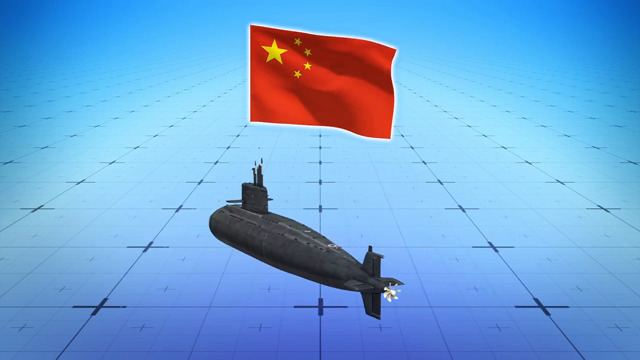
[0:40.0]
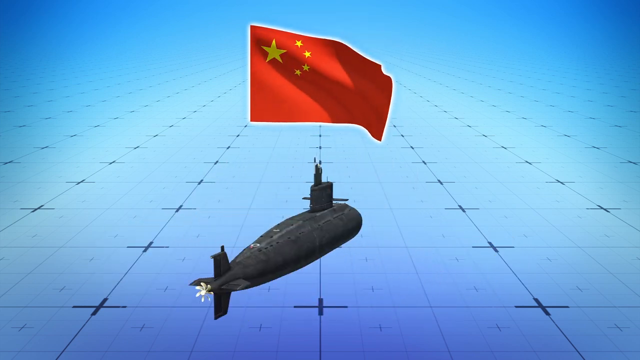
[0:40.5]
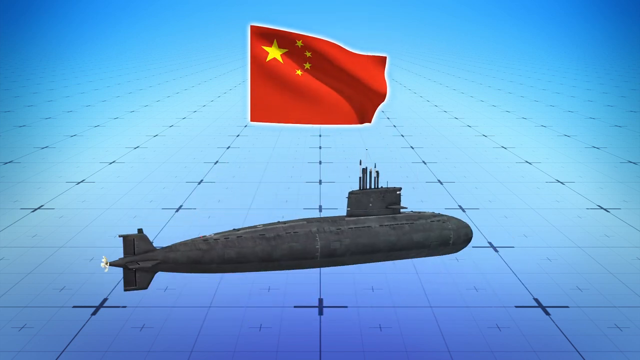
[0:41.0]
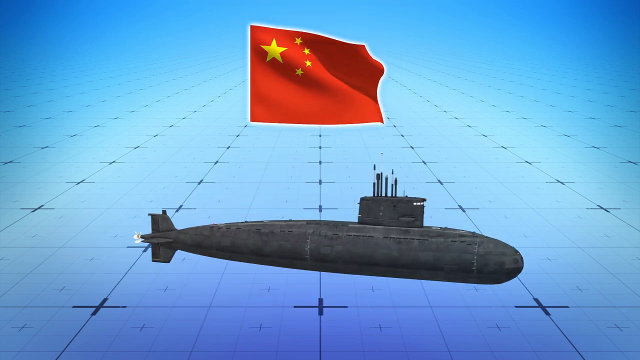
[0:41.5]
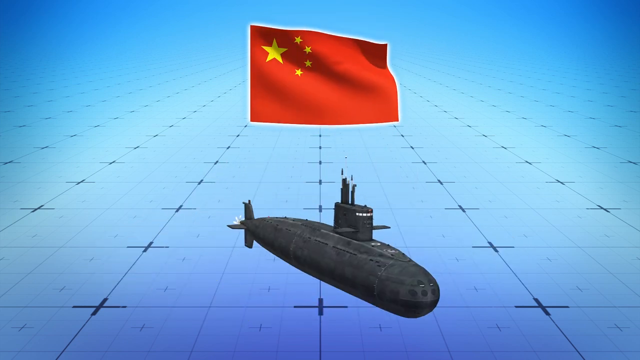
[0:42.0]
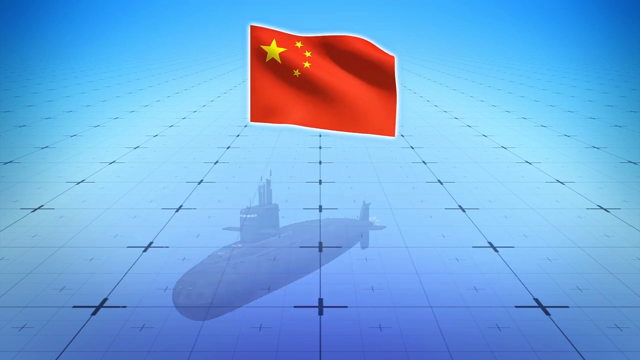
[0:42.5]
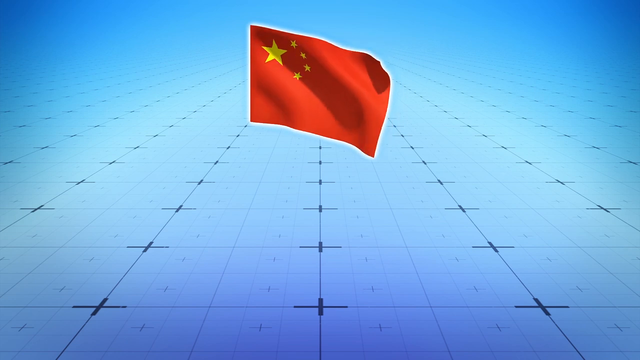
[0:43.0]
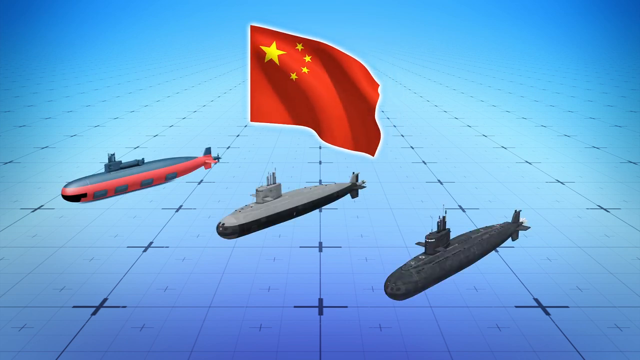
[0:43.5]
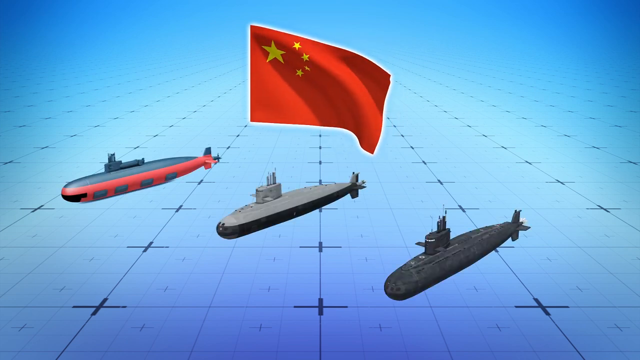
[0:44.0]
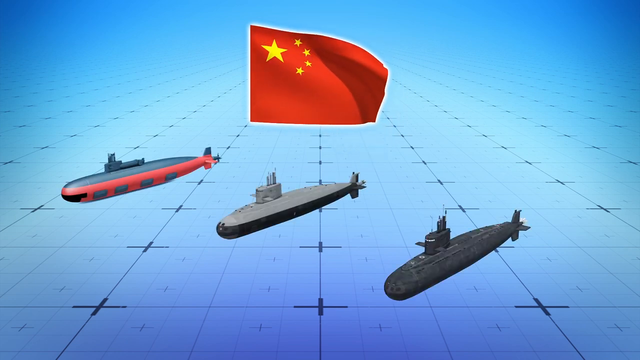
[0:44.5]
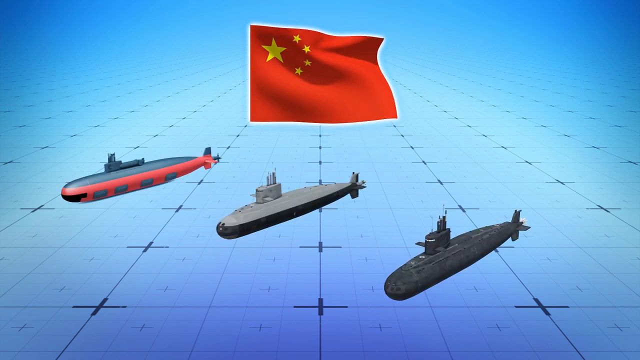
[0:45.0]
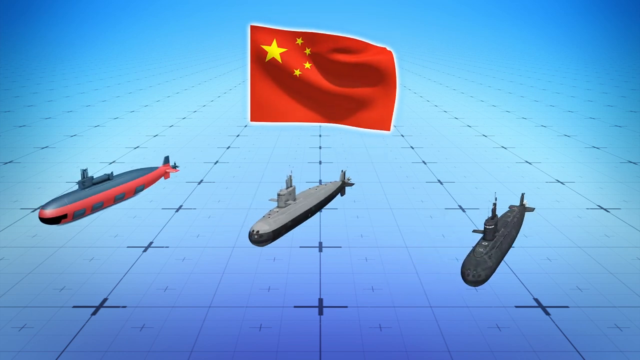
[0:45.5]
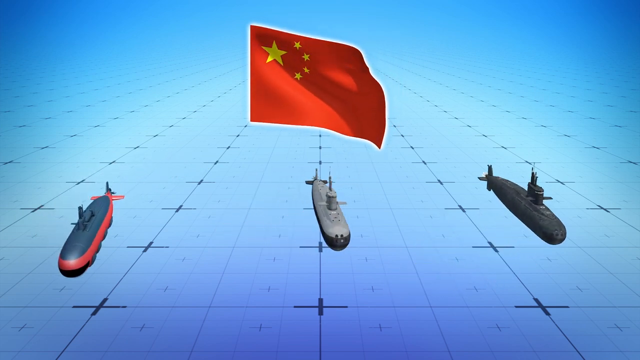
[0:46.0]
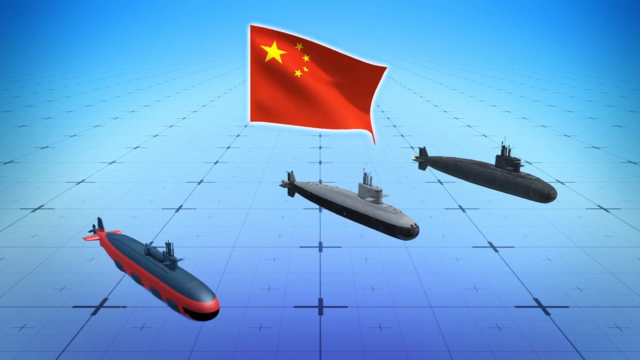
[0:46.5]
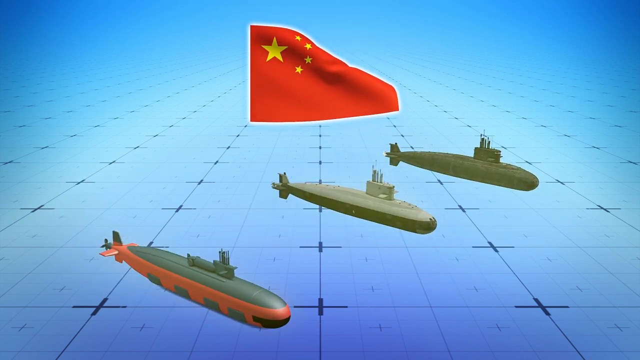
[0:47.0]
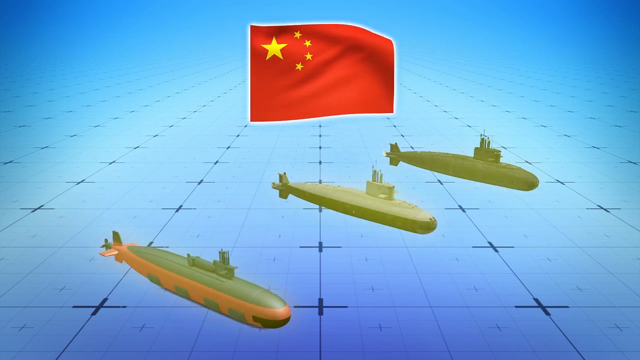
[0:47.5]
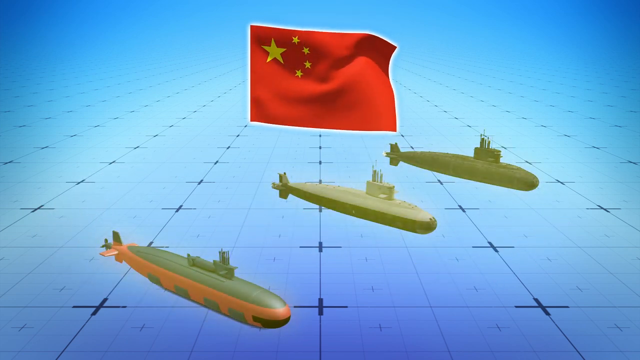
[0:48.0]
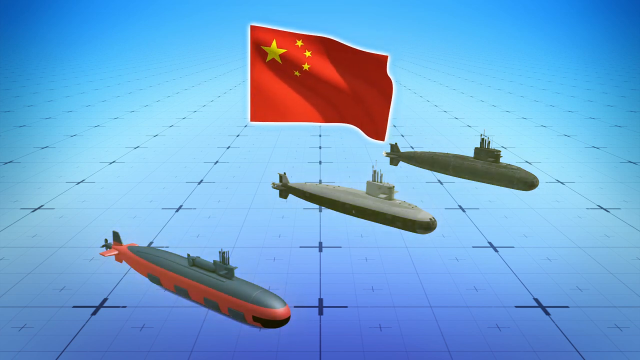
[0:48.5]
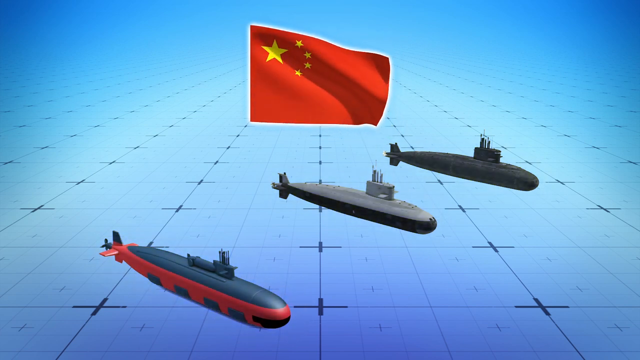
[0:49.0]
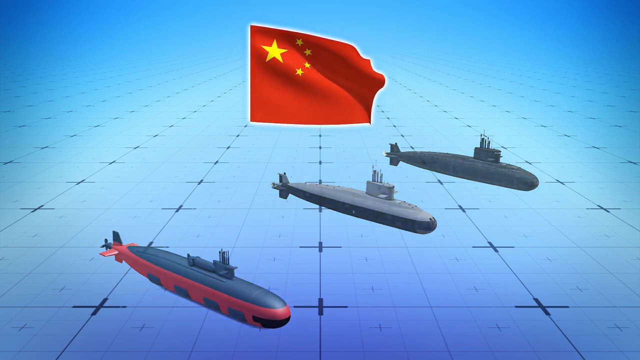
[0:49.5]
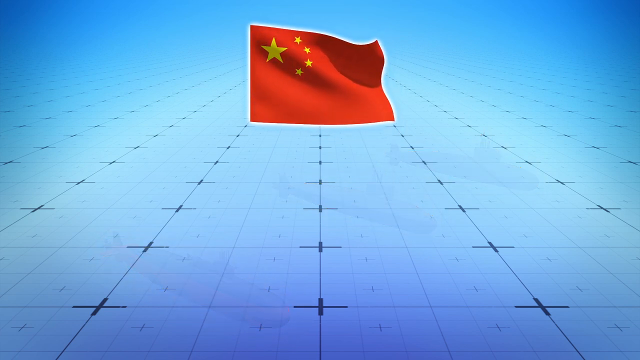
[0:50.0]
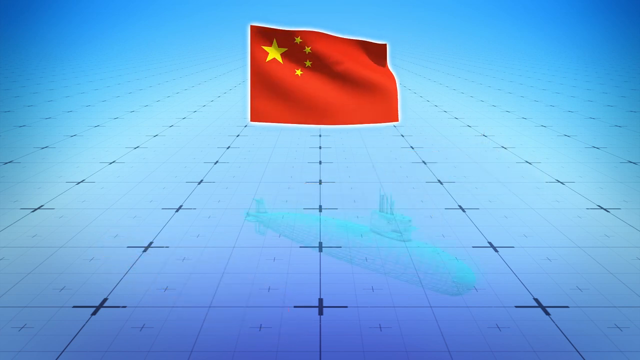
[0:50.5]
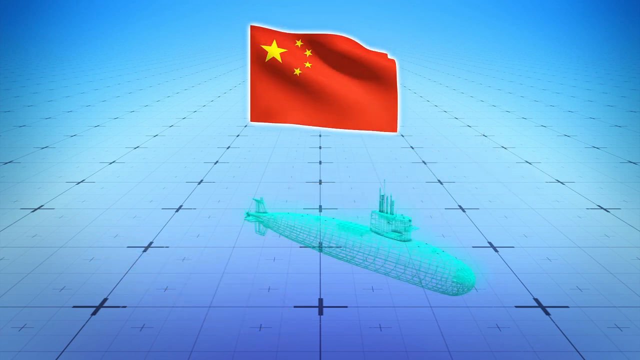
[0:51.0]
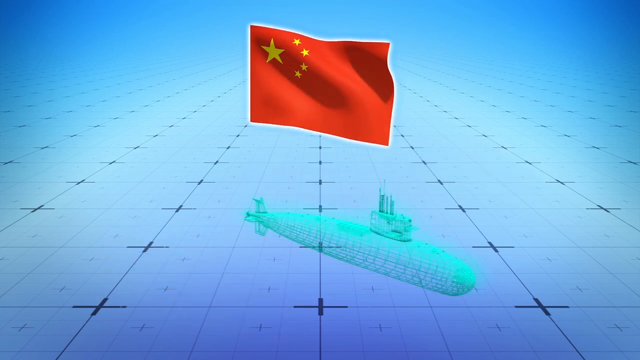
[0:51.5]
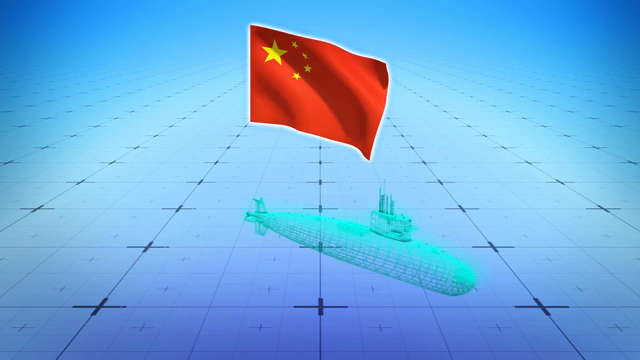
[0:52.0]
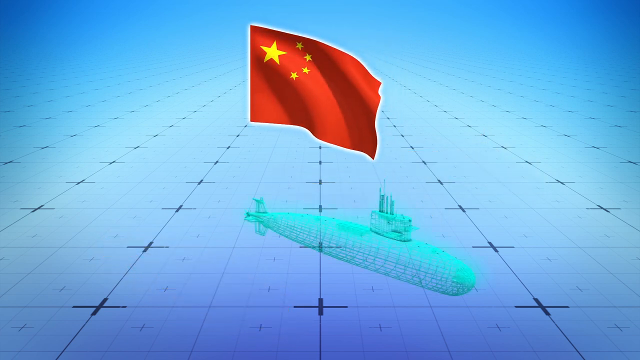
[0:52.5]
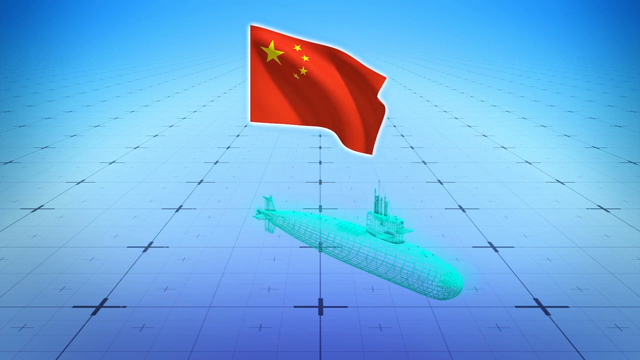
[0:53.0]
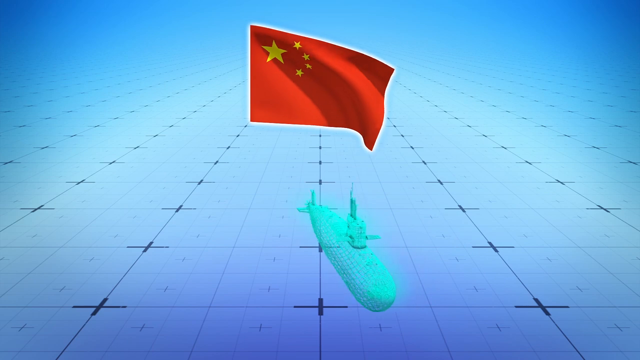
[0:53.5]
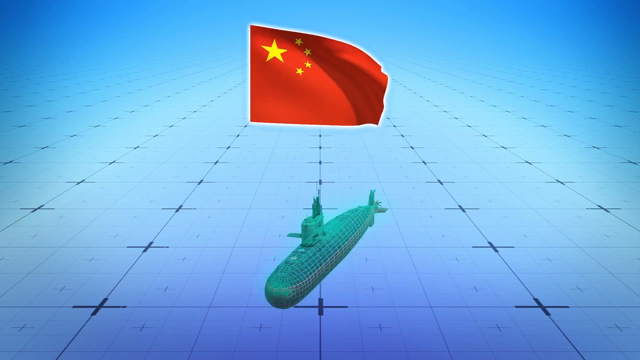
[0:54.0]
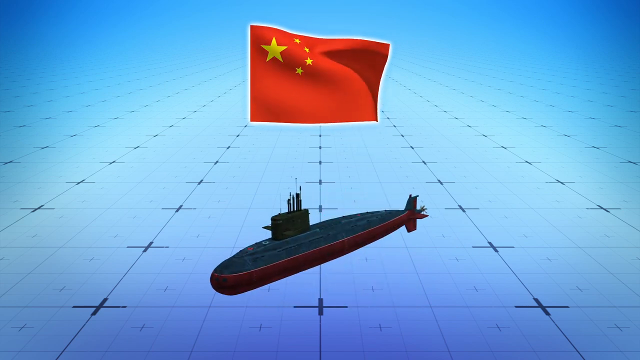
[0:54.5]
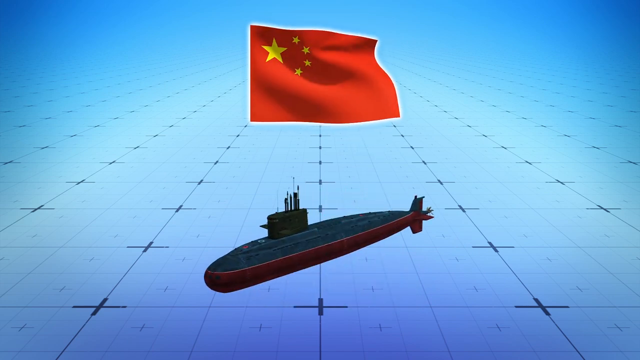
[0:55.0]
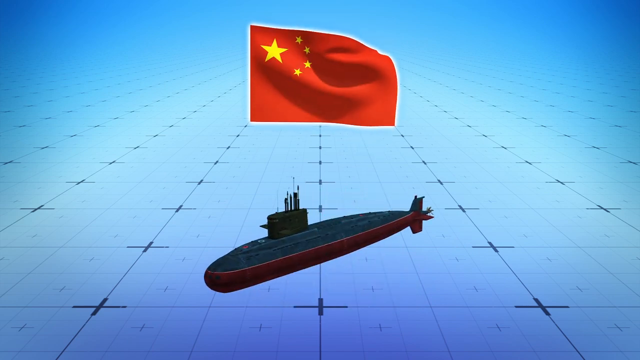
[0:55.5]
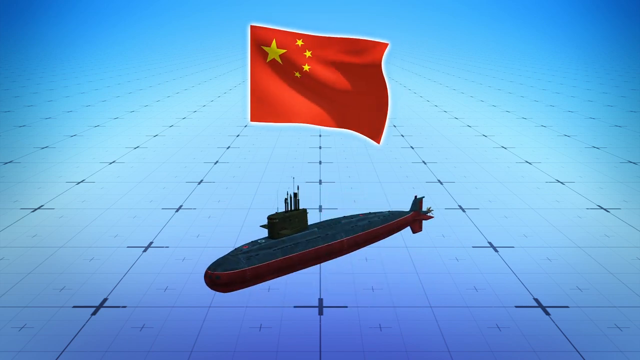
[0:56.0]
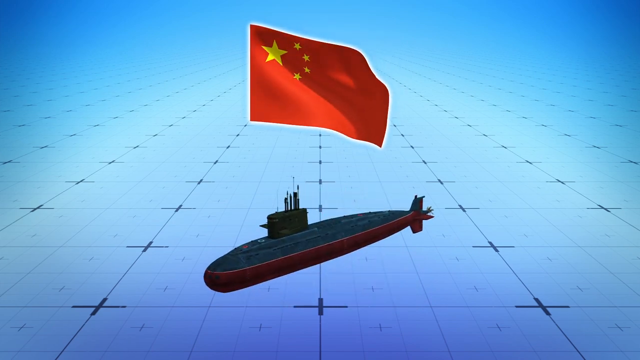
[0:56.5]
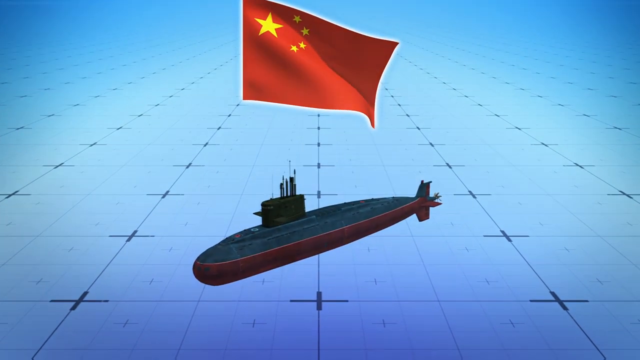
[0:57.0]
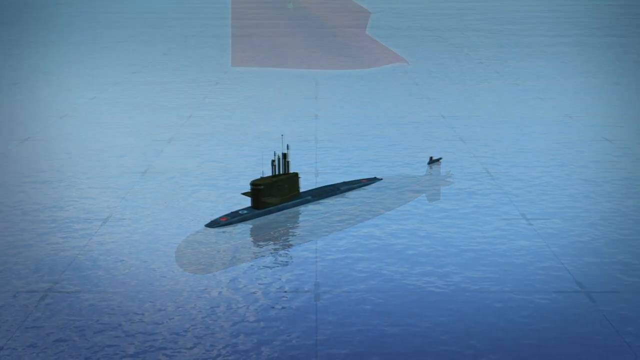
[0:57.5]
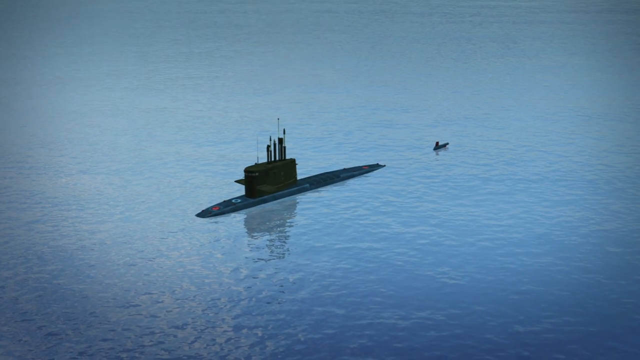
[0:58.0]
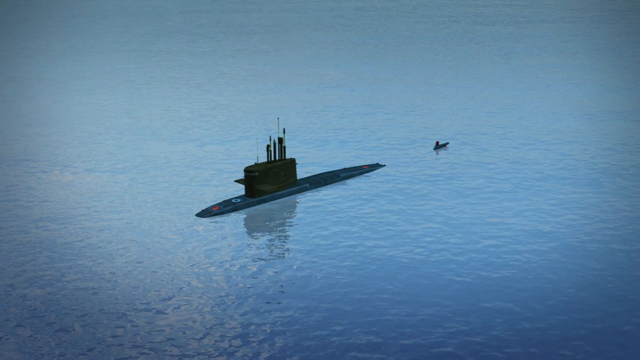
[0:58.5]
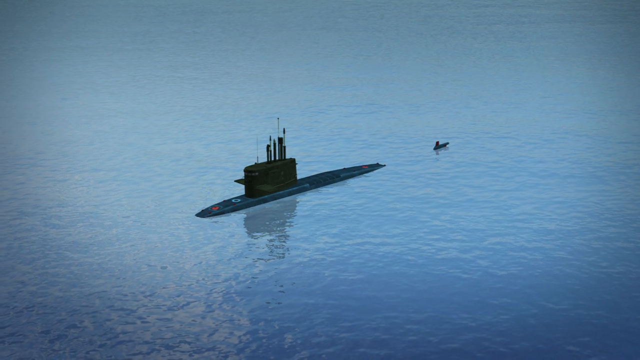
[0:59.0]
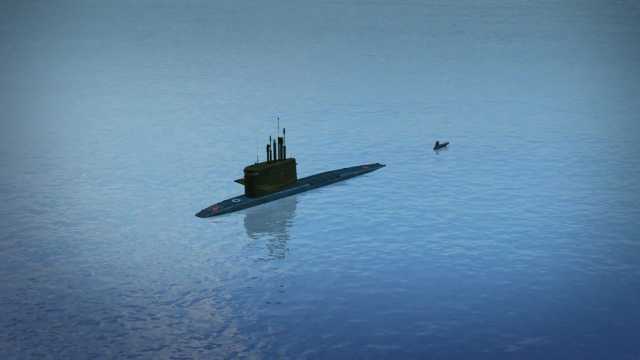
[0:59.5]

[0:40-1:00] The black submarine continues to spin around while the Chinese flag waves at the top. Three submarines then appear on the screen at the same time. The one on the left is the original red and black one, with red at the bottom, black at the top, and black windows. The one in the middle has black at the bottom and a cream grey colour at the top. The one on the right is the black one. The Chinese flag is still at the top of the screen and still moving. The submarines at the bottom switch around, almost as if they are being swivelled, but stay the same distance from each other, so the red and black one is now nearer the front of the screen, whereas before it was at the back. They all start to be highlighted in yellow and then disappear off the screen, followed by a submarine that looks highlighted in very pale blue, which fades to reveal the red and black submarine. The view zooms in to show it in real life in the water; the water is moving and the submarine is just sticking out at the top.